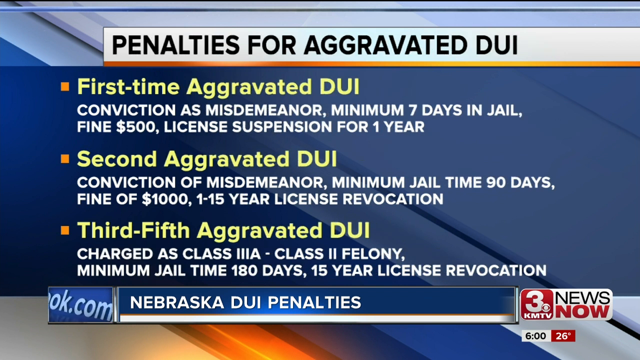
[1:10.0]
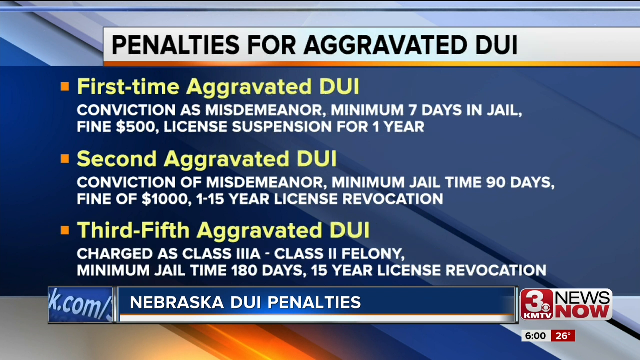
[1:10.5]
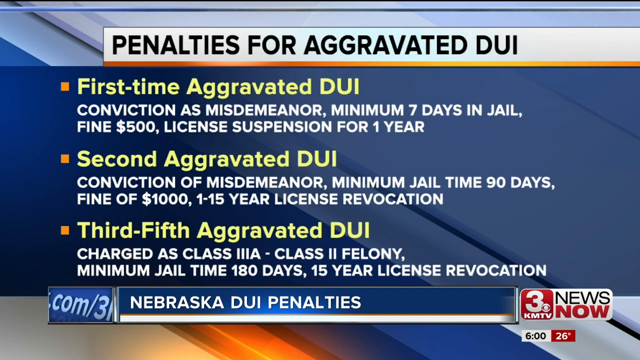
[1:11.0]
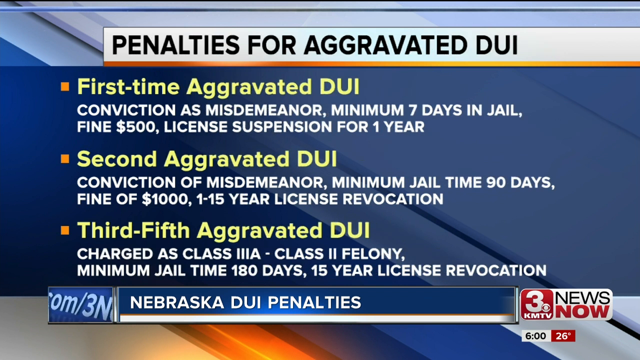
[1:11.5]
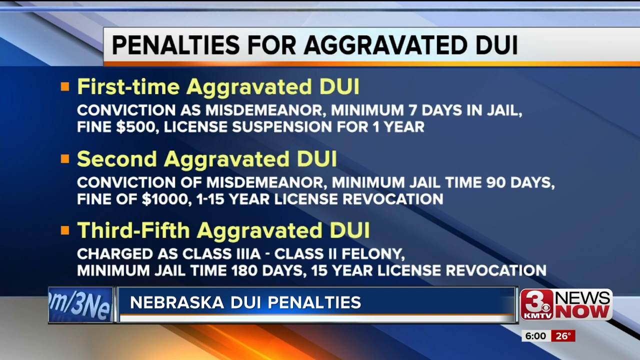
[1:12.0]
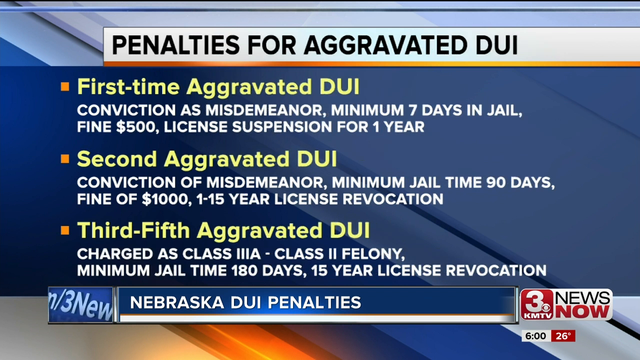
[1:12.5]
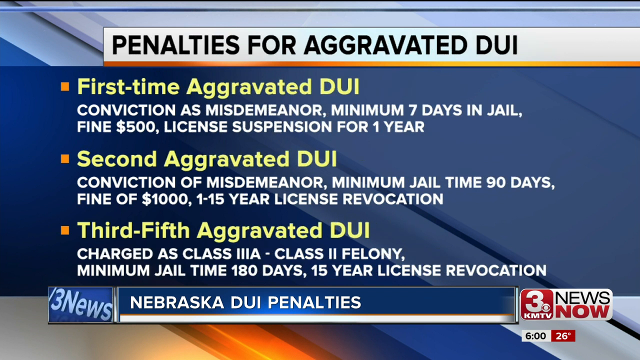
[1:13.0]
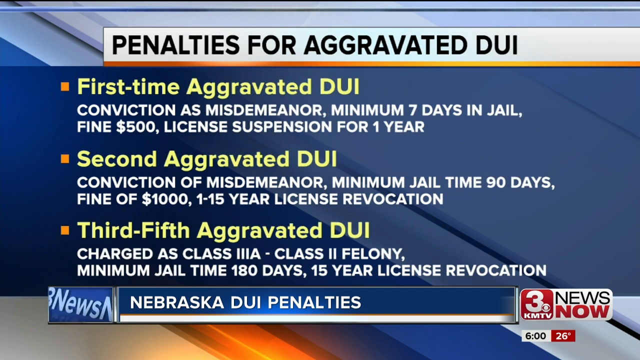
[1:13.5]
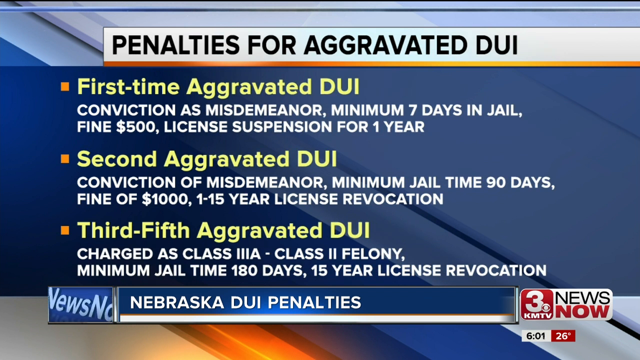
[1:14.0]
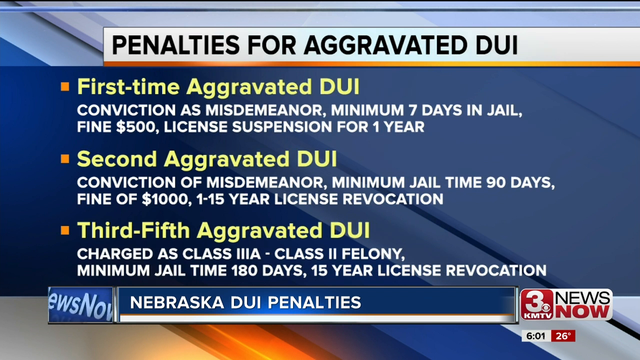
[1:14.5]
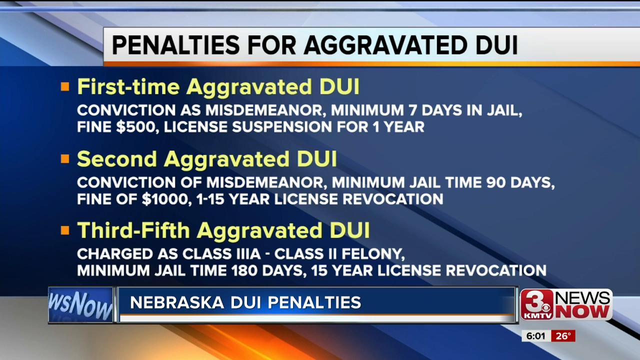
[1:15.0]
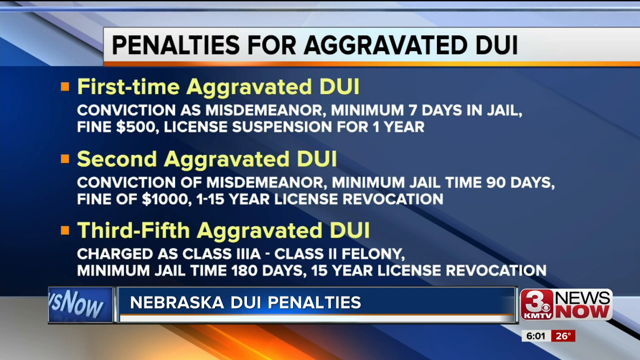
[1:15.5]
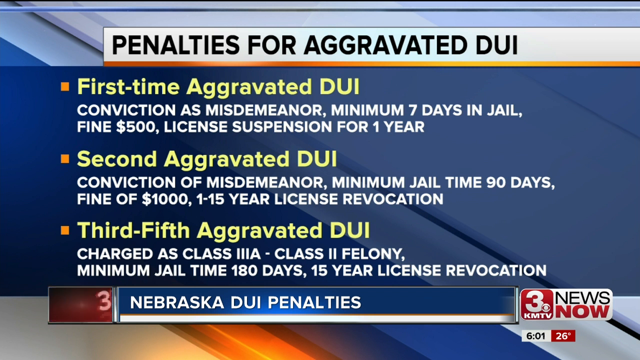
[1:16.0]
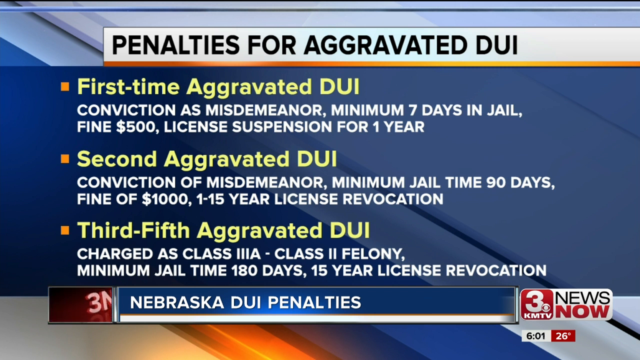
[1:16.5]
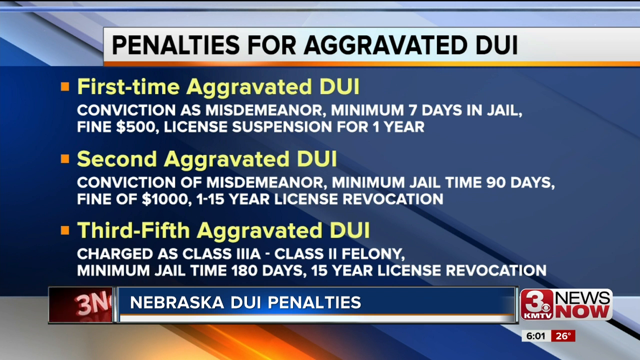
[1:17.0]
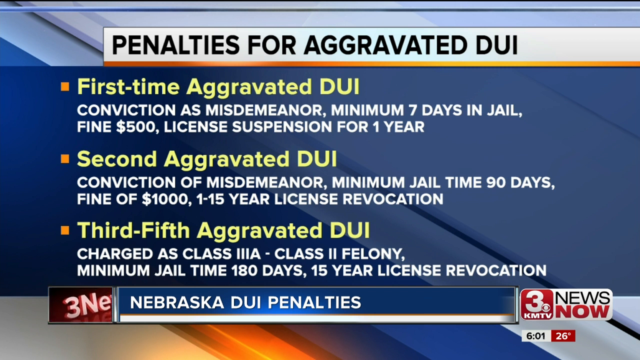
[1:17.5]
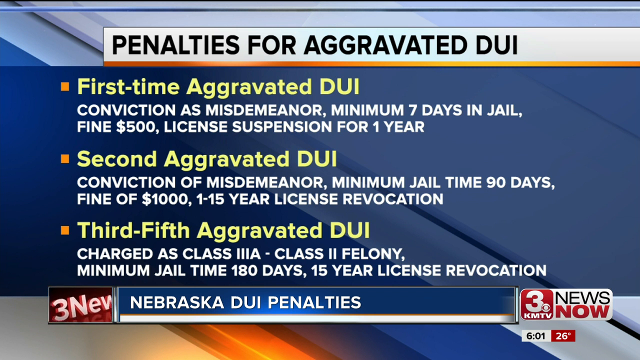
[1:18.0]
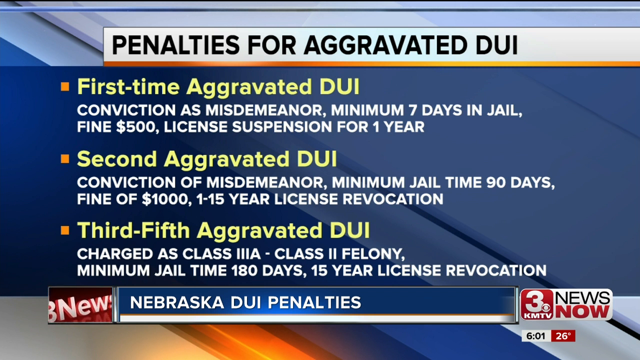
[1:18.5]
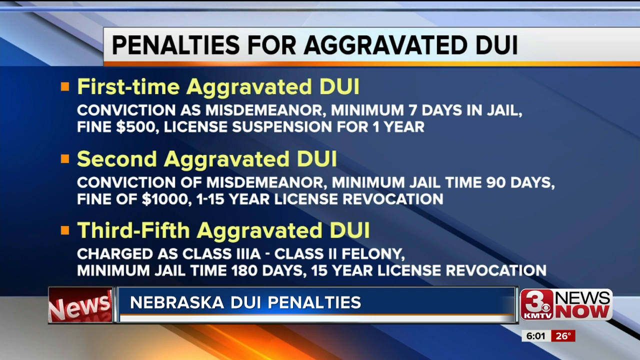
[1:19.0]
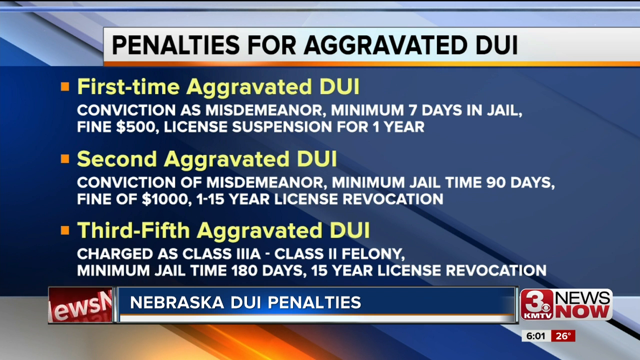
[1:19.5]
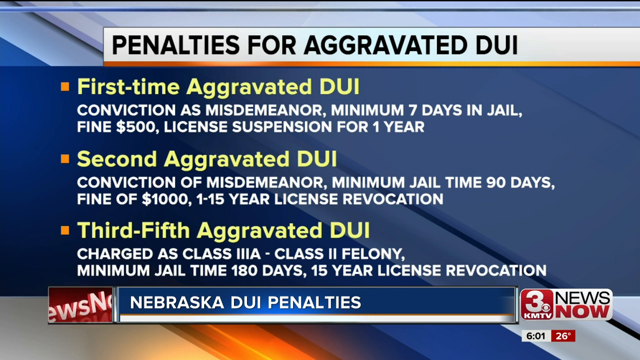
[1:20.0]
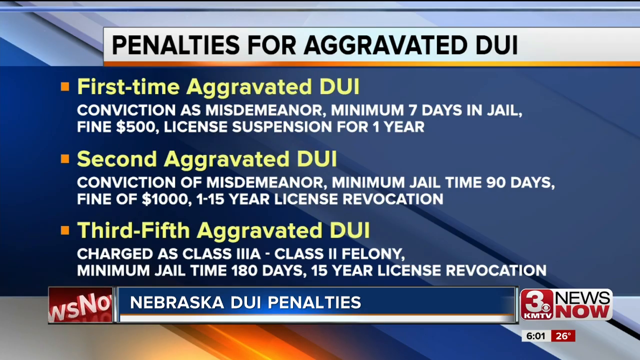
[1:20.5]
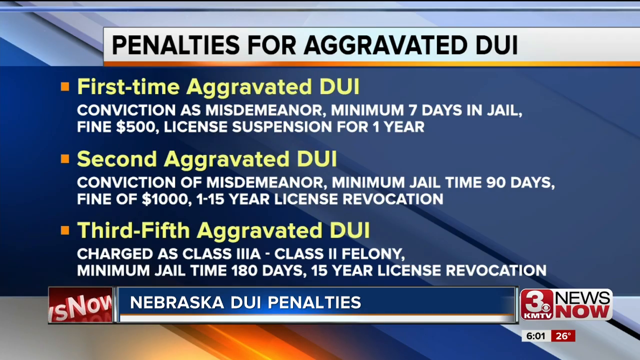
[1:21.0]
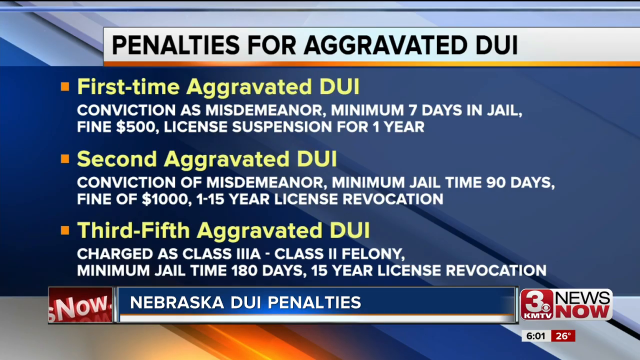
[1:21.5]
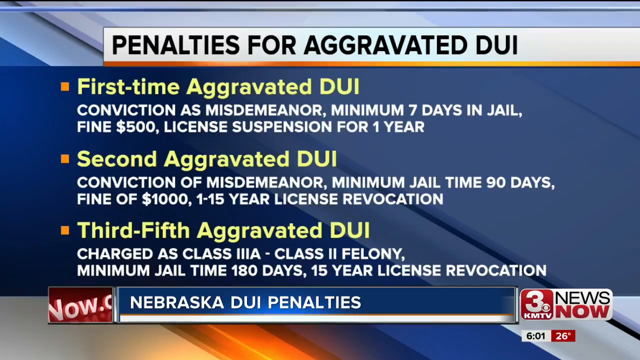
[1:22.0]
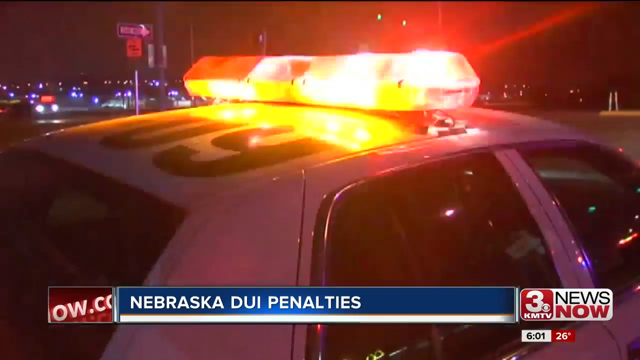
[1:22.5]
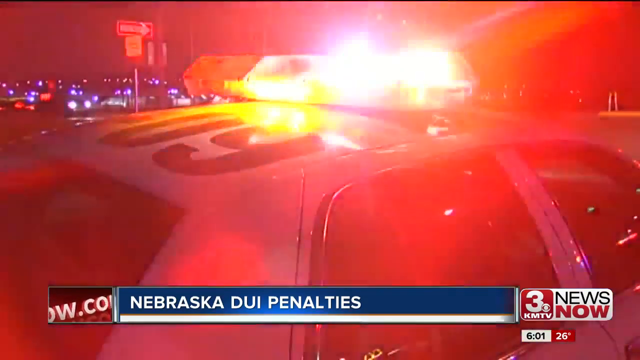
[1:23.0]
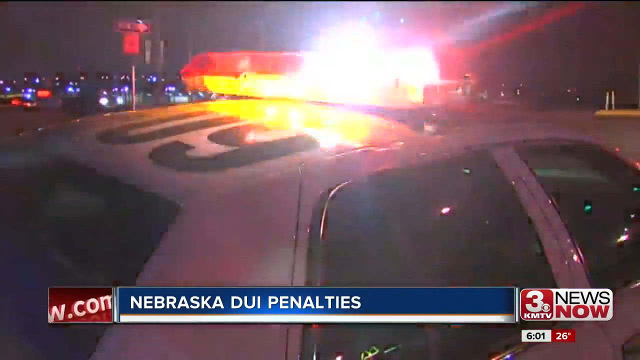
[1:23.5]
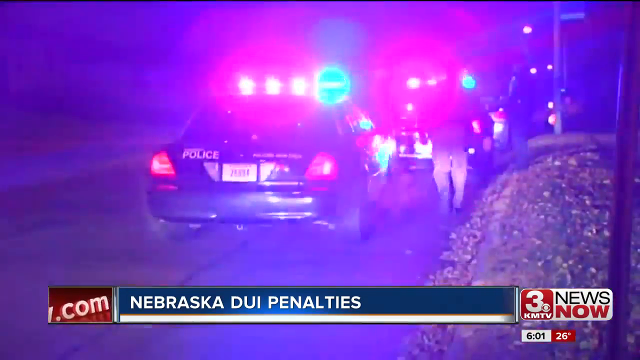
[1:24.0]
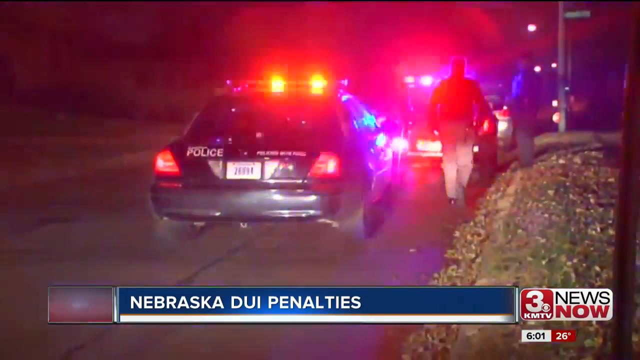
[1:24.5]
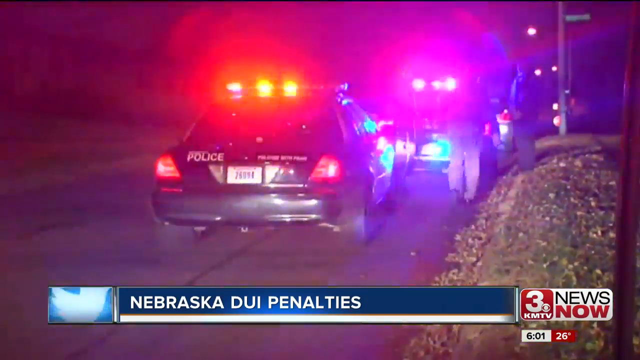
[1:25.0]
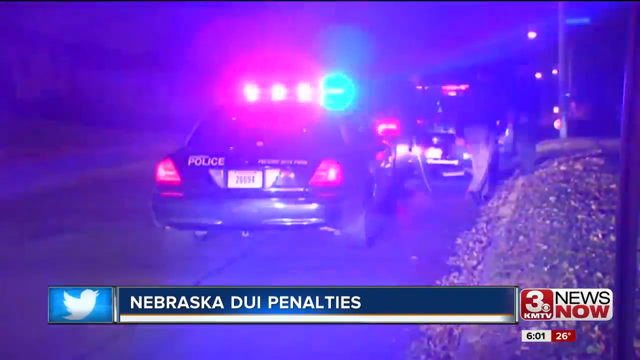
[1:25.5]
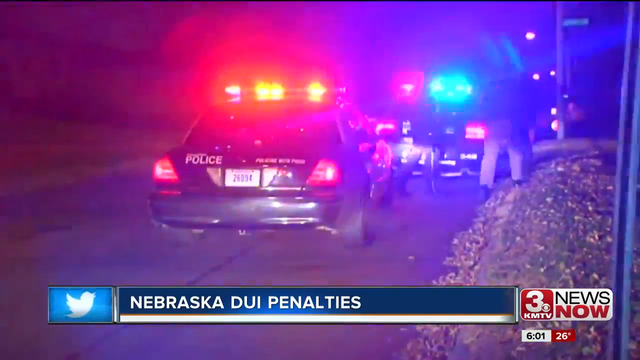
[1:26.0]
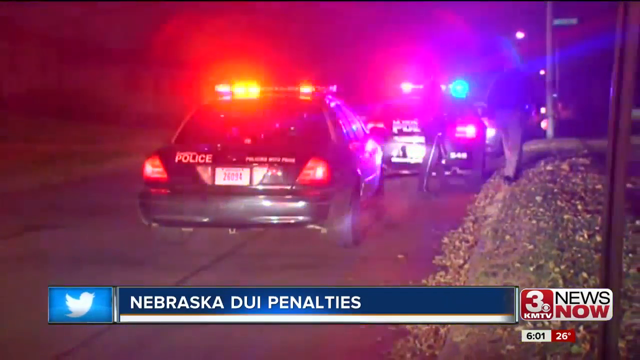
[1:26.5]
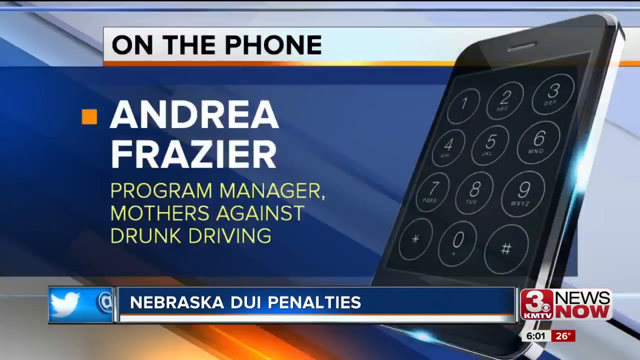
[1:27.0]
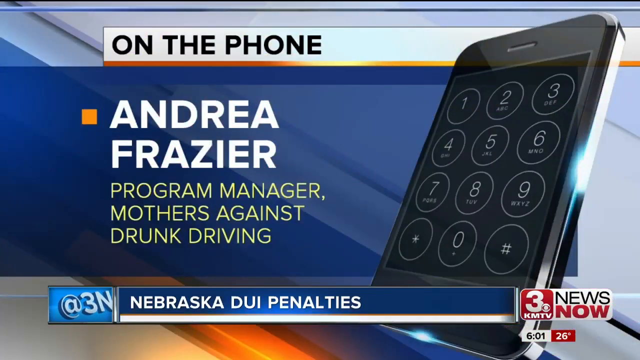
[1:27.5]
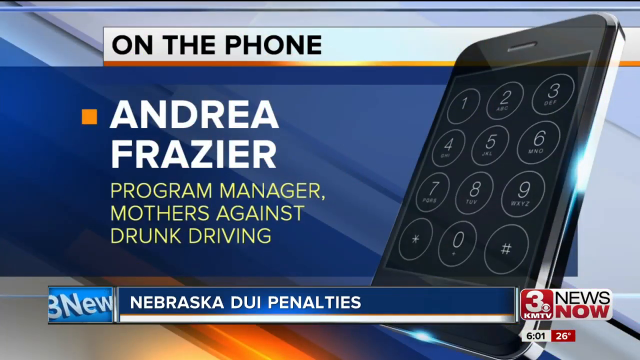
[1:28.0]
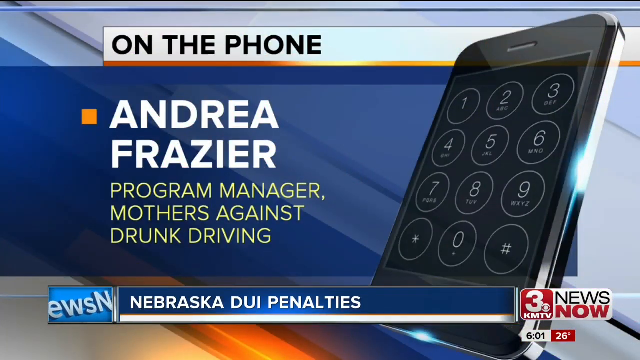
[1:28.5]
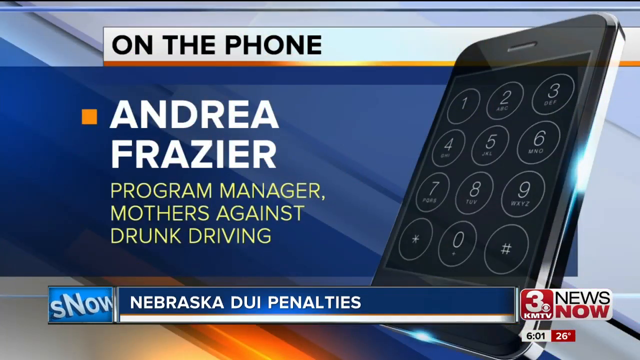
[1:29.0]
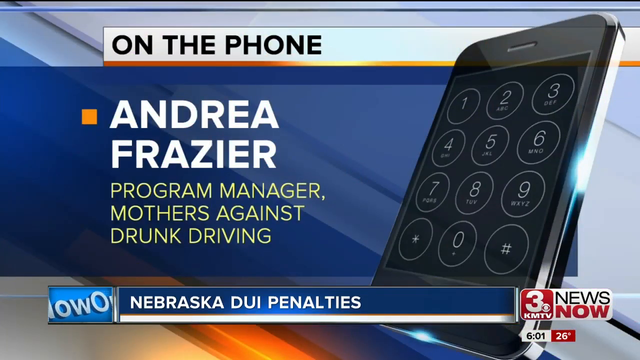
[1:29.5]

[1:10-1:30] The report returns to the roadside at night, right next to a police patrol car with the number nine written on its roof and its emergency lights flashing. At the roadside with the two police cars, the emergency lights are almost blinding. Two policemen walk back to talk to a driver. A graphical image of a smartphone is shown, indicating that the presenter is talking to Andrea Frazier, program manager of the organization Mothers Against Drink Driving.